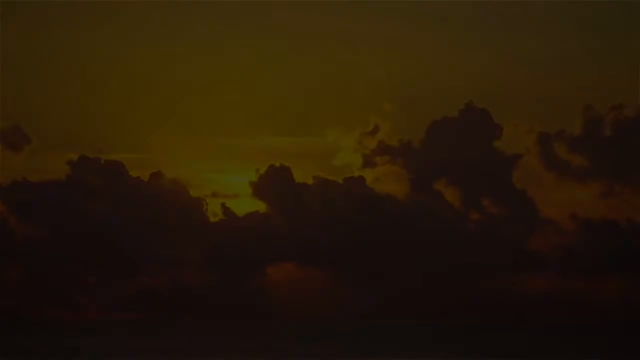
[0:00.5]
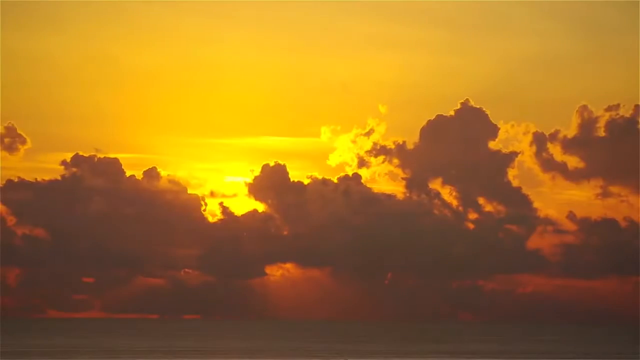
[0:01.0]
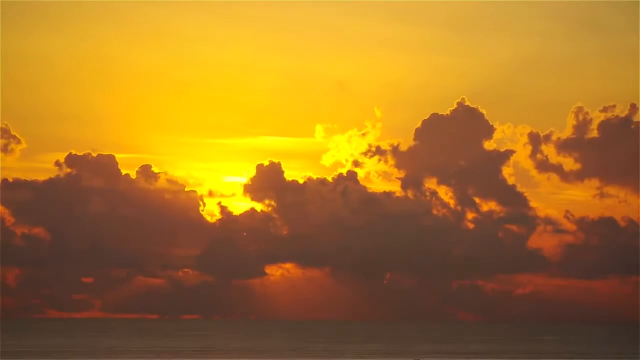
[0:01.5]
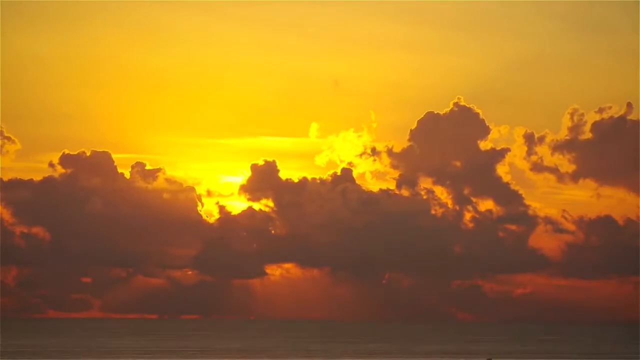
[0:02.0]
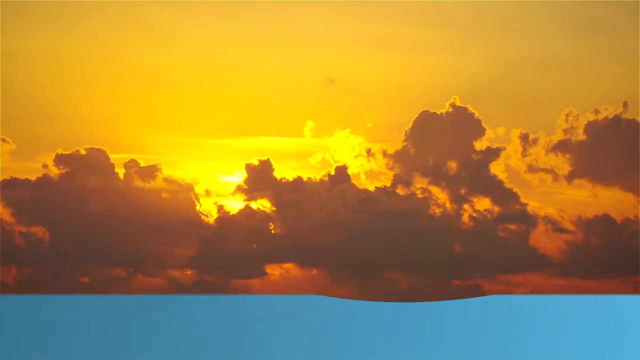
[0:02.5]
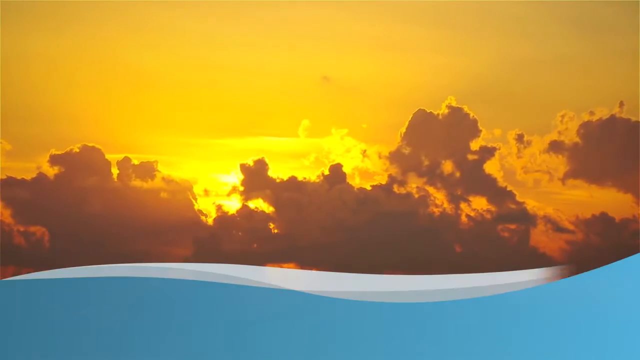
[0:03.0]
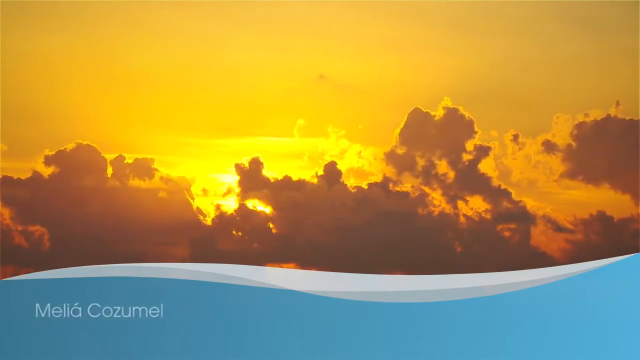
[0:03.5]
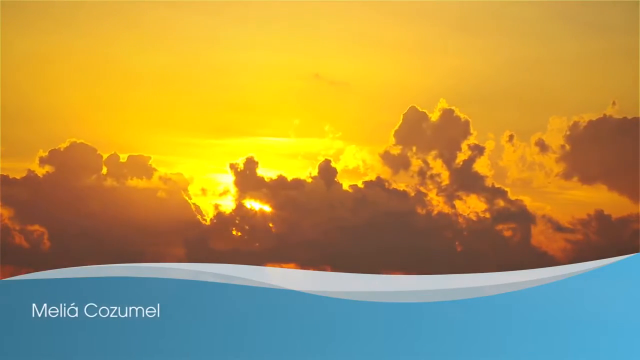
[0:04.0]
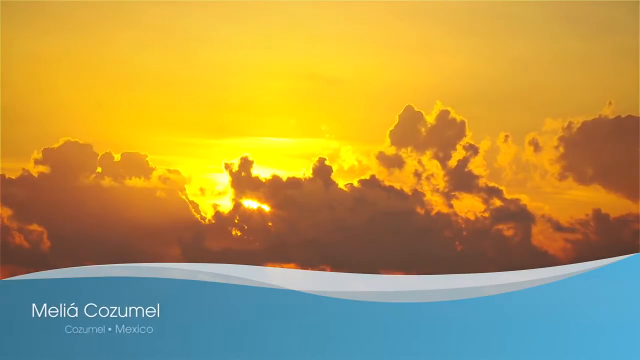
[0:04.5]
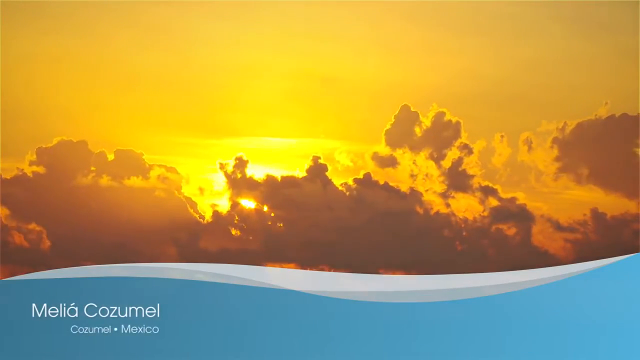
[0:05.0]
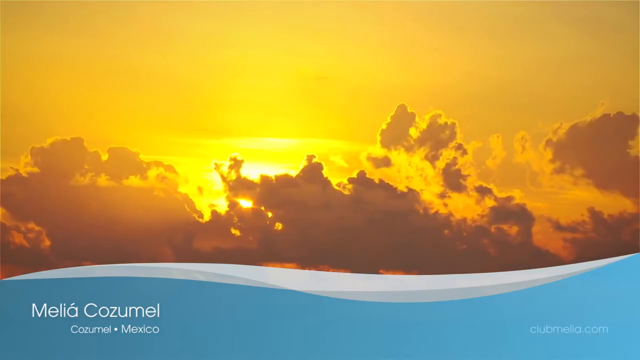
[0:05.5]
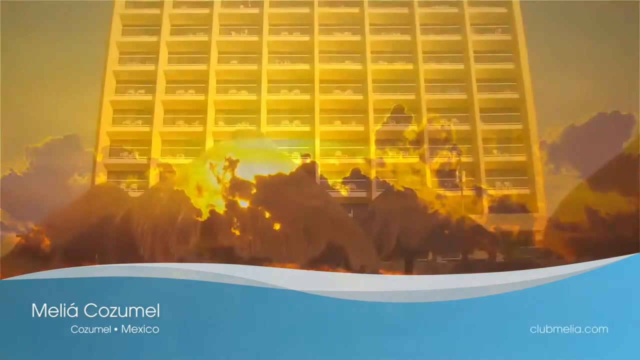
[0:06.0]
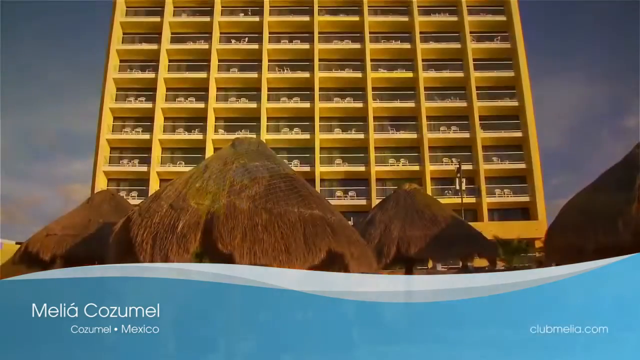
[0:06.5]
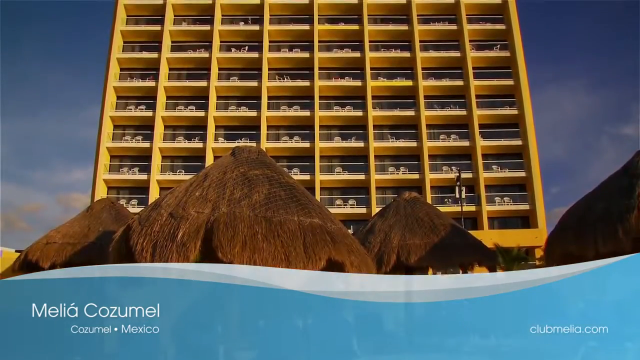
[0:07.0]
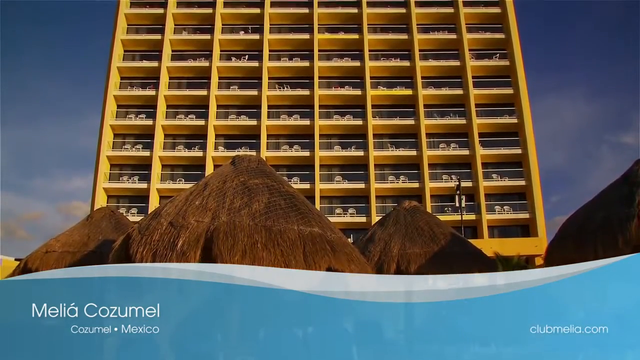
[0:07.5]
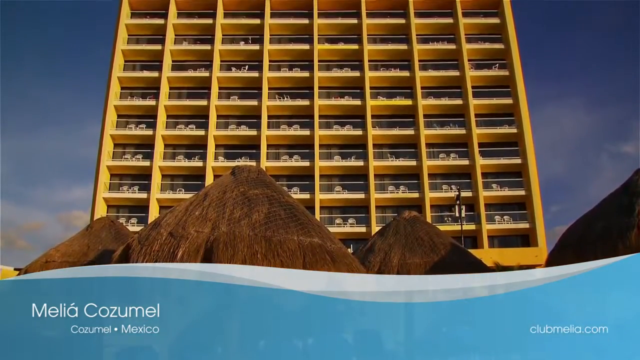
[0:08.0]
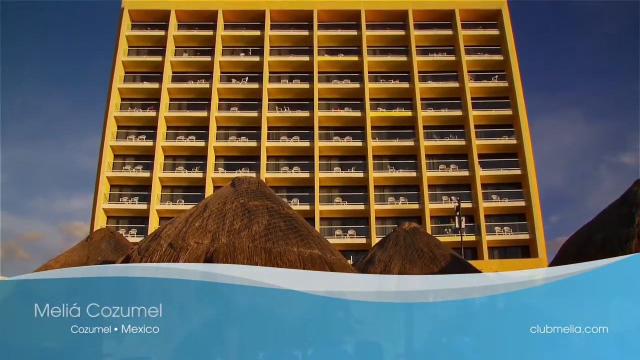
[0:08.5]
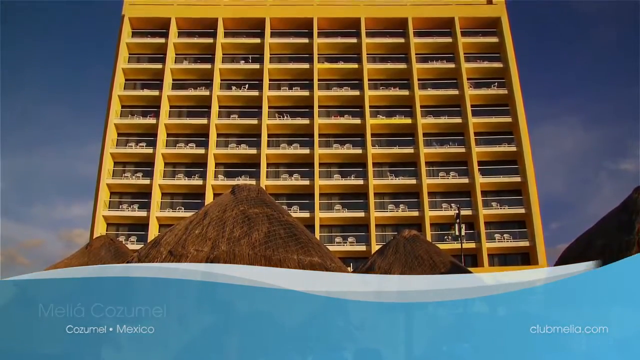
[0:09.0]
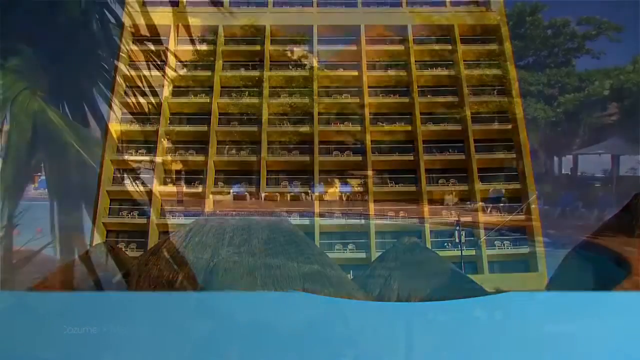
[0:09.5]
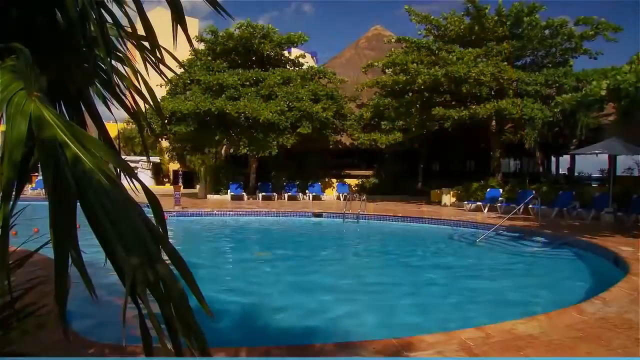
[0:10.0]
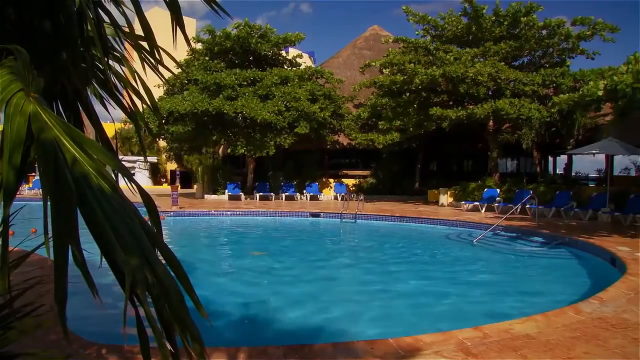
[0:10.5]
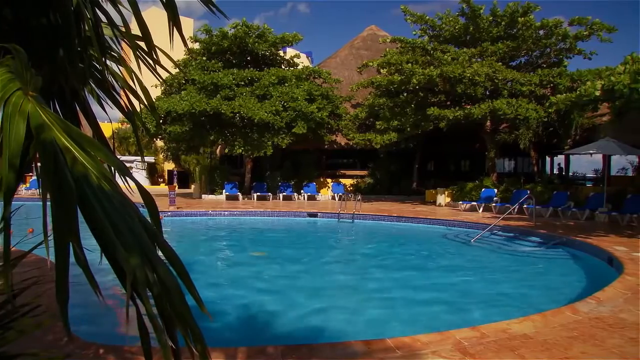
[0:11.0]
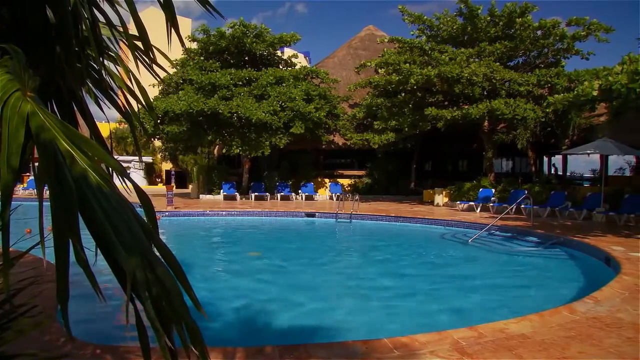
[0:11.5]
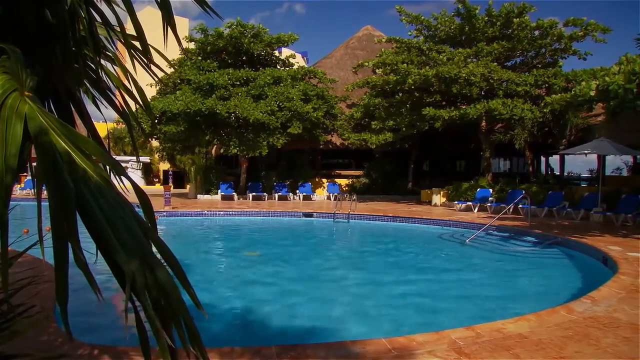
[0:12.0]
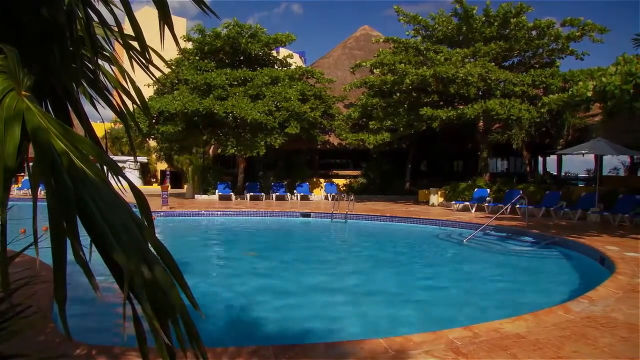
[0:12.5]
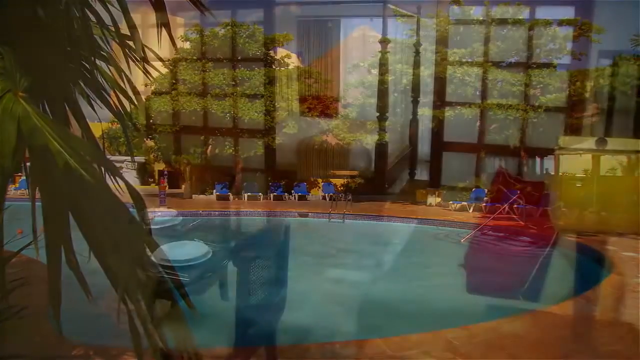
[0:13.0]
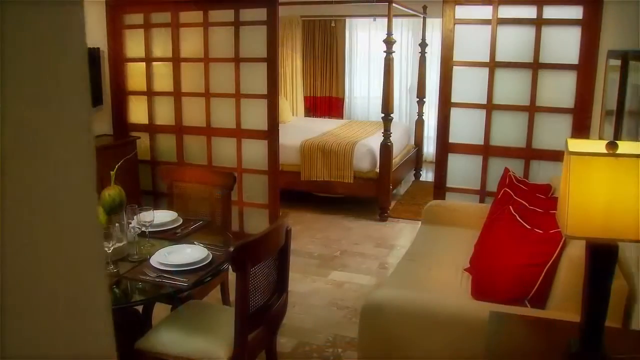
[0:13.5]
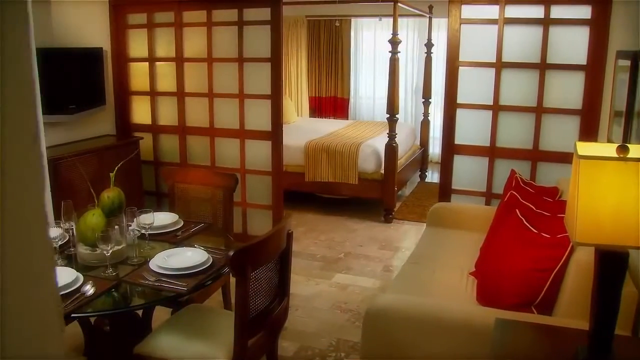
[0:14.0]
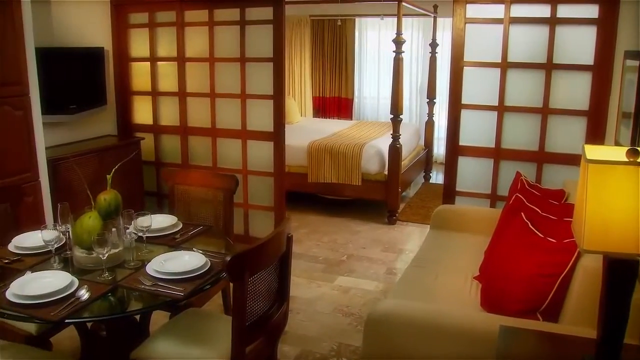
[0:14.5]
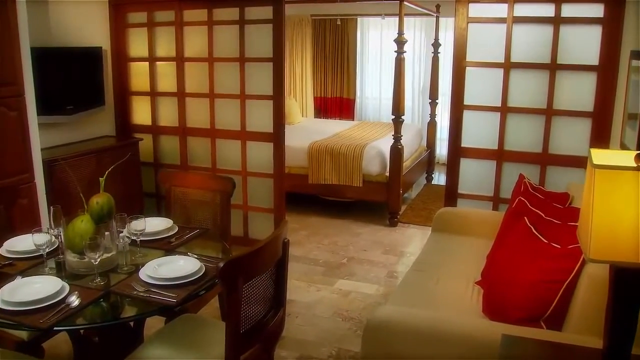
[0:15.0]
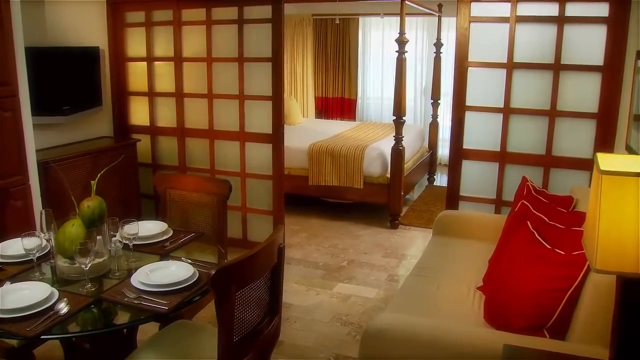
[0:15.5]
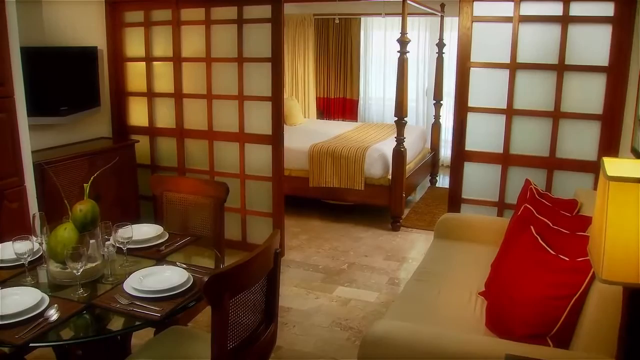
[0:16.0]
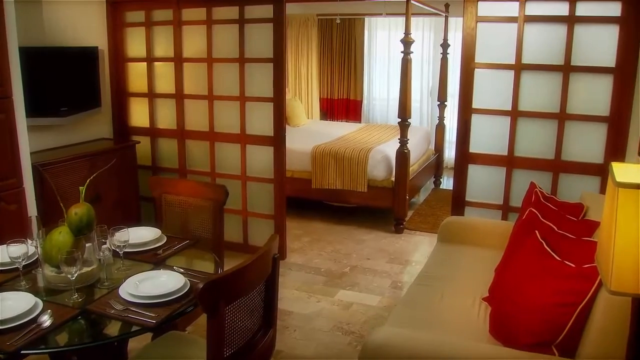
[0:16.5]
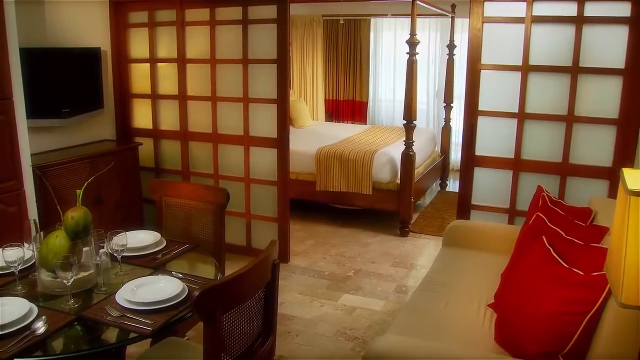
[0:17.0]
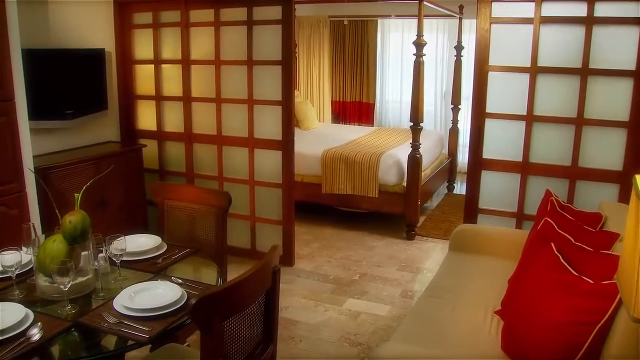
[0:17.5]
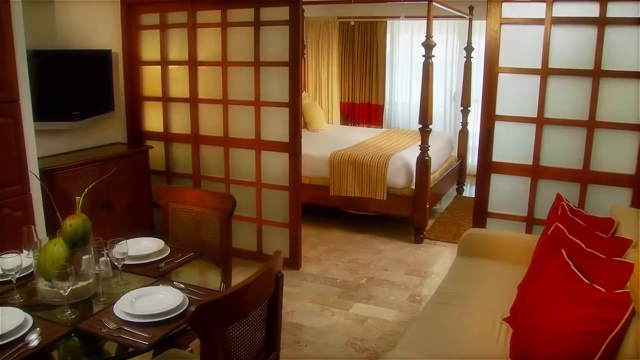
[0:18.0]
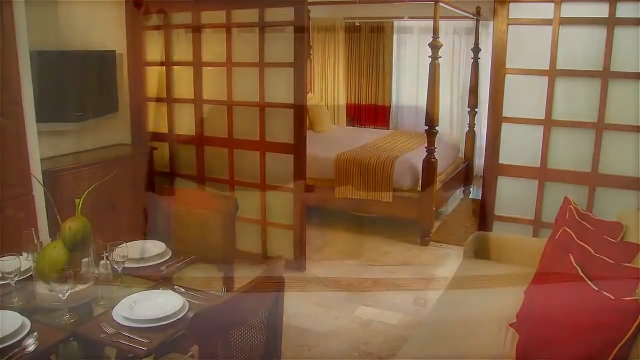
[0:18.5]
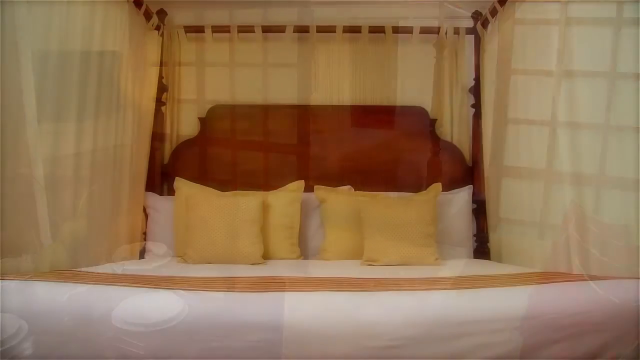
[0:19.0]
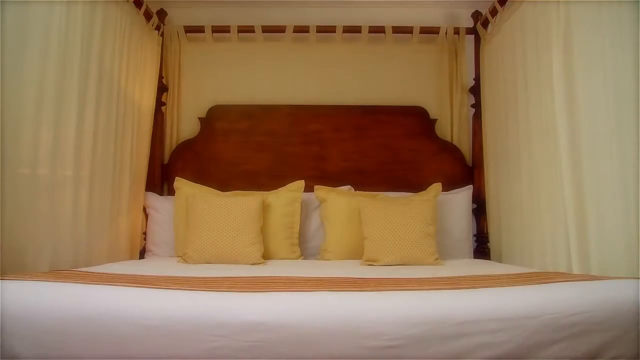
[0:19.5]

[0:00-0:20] The video opens on a view of clouds, with the sun apparently either setting or rising, and the words "Melia Cozumel" in the lower left-hand corner. The camera then pans out to what looks to be a hotel resort, showing the outside of the hotel rooms. The building is square in shape, yellow in colour, and shows various rooms; in front of it are three large brown boulders. The camera pans out to the poolside area, which is round in shape and surrounded by several blue lounge chairs and some green trees. Next the camera pans out to the inside of one of the rooms, showing the kitchen area and the bed area, then moves to the front of the bed for a wide view of it: a white mattress, yellow pillows and a brown headboard.